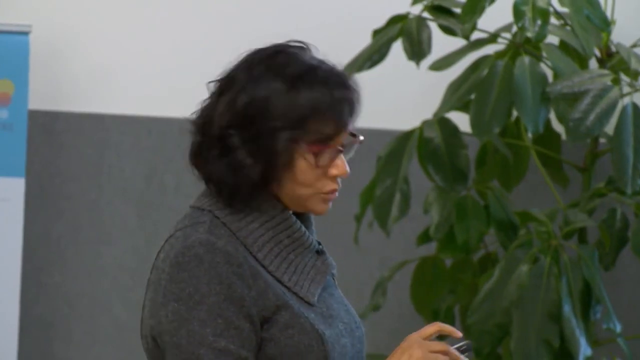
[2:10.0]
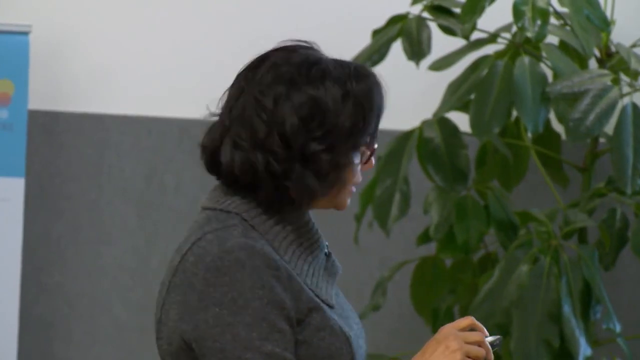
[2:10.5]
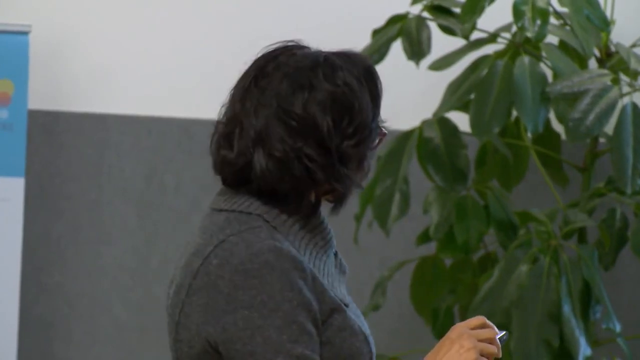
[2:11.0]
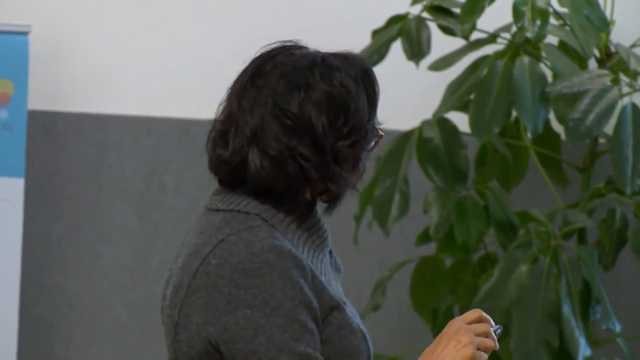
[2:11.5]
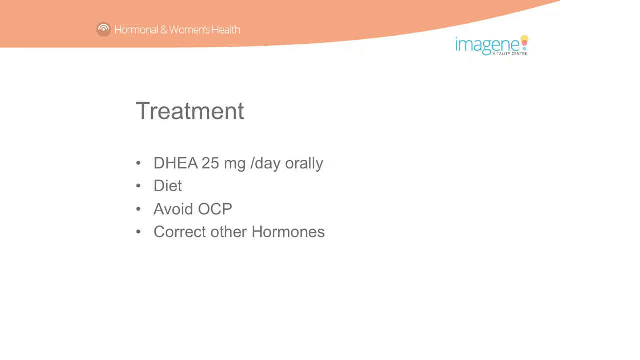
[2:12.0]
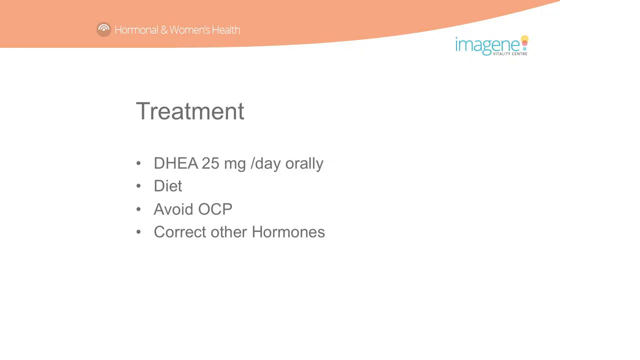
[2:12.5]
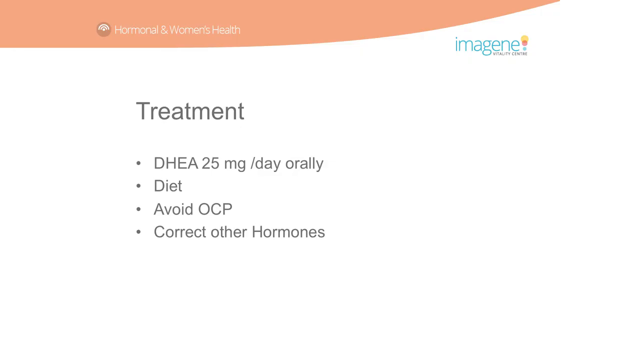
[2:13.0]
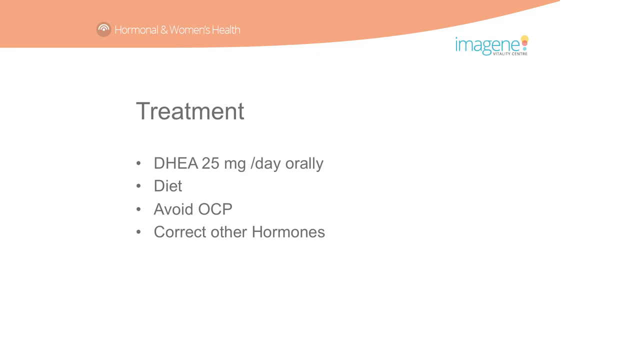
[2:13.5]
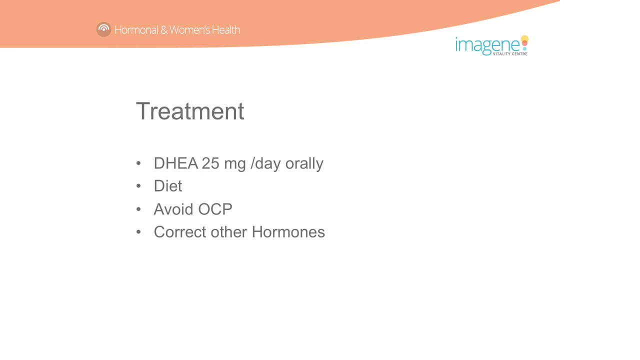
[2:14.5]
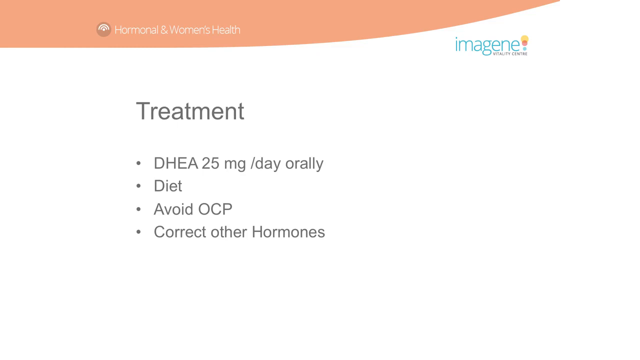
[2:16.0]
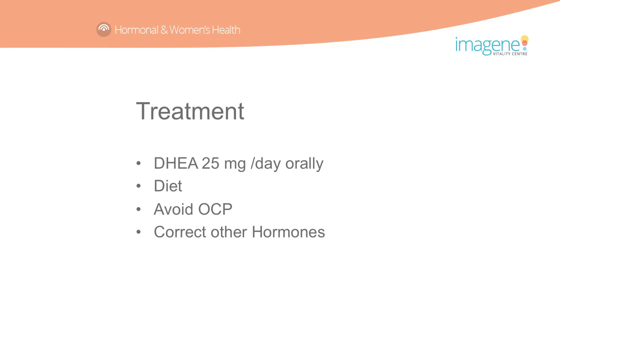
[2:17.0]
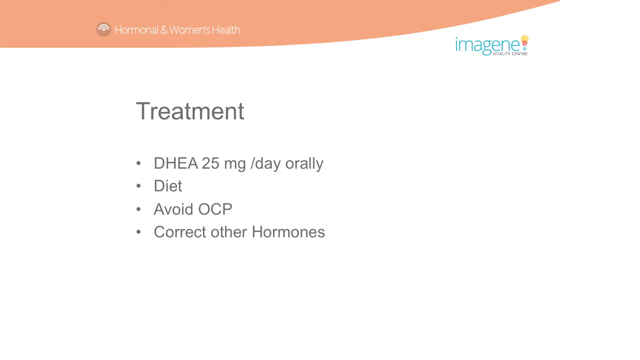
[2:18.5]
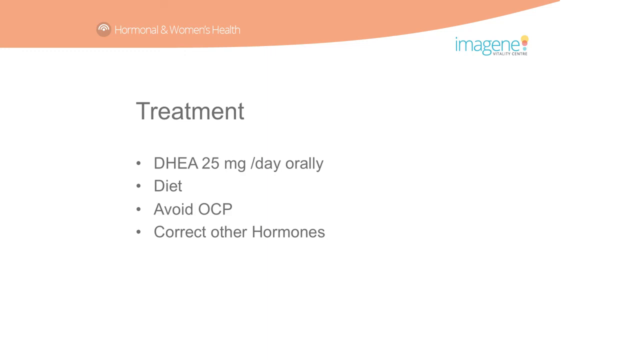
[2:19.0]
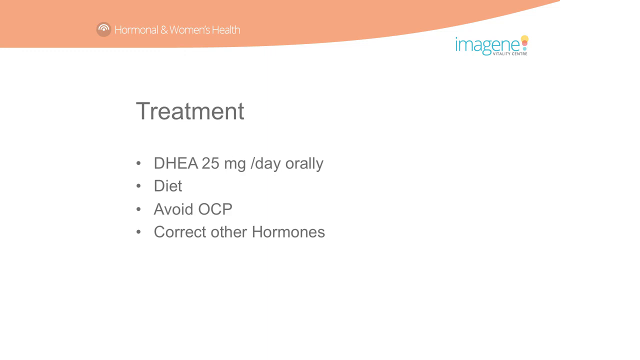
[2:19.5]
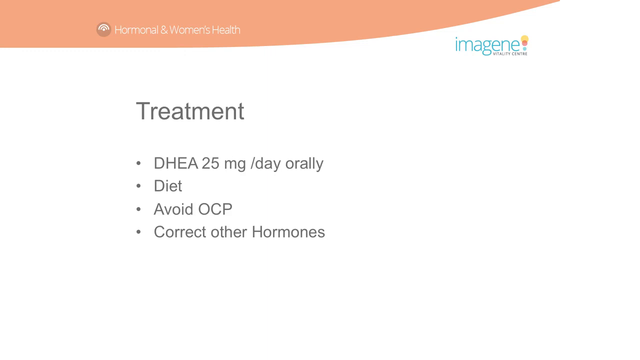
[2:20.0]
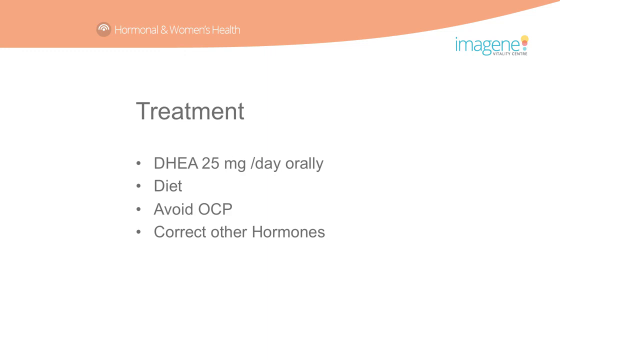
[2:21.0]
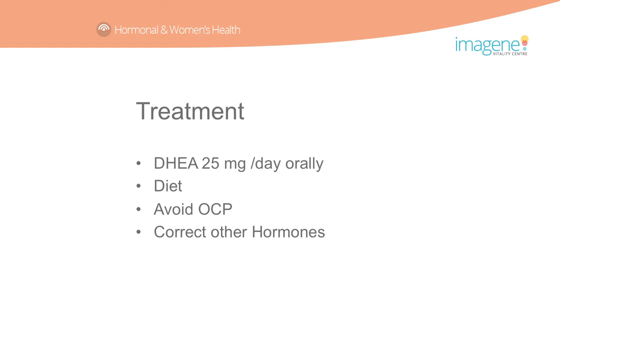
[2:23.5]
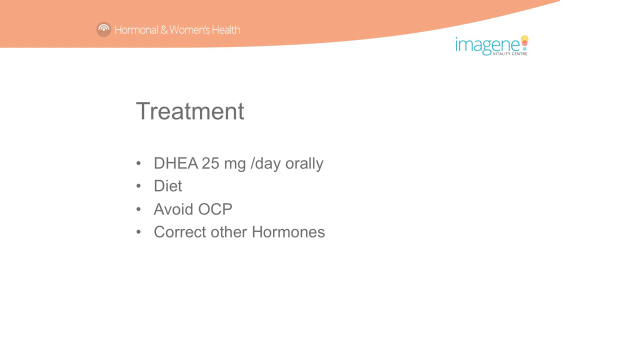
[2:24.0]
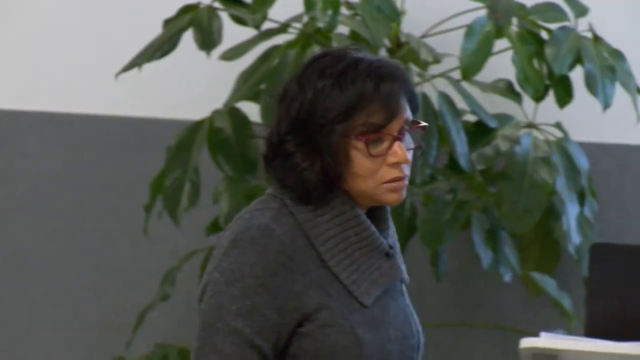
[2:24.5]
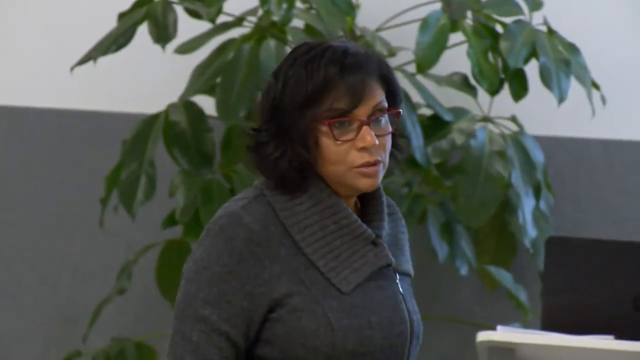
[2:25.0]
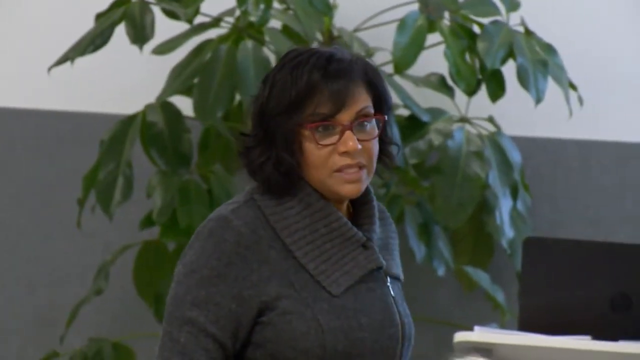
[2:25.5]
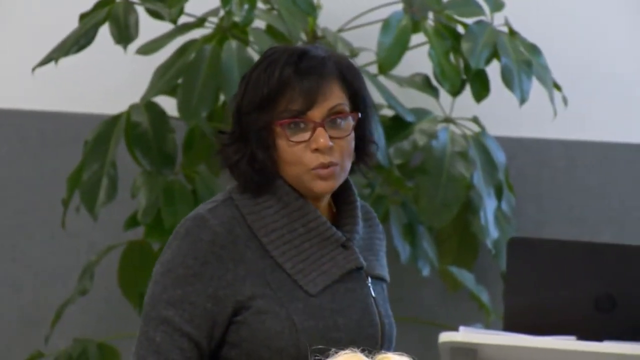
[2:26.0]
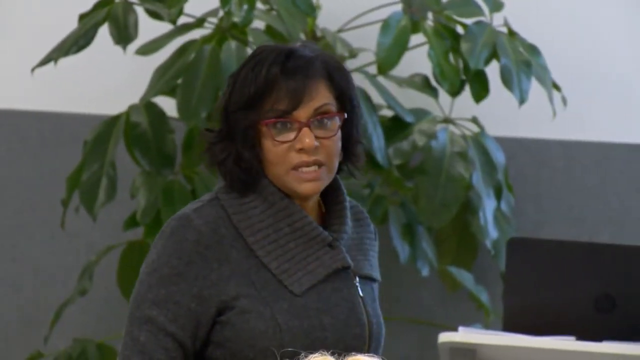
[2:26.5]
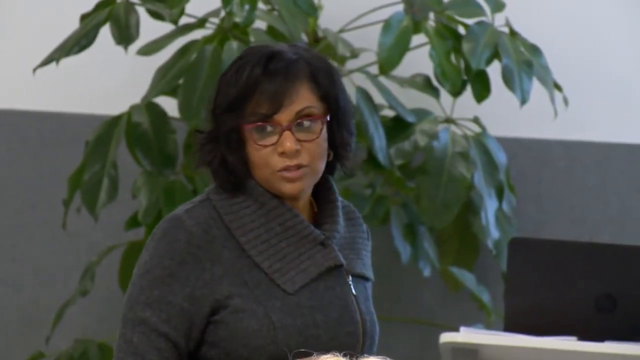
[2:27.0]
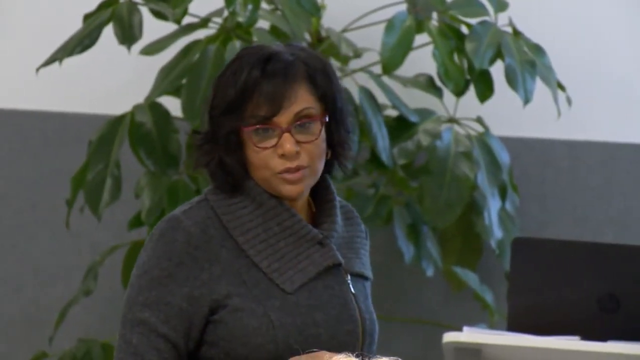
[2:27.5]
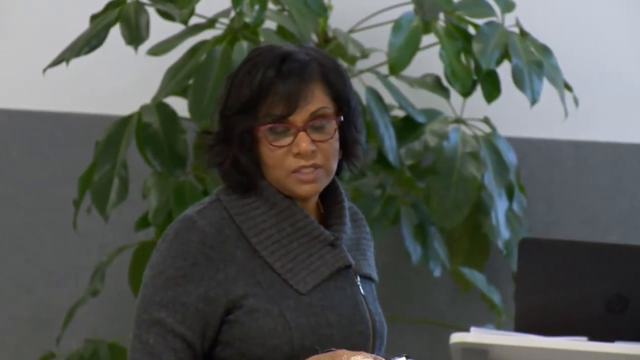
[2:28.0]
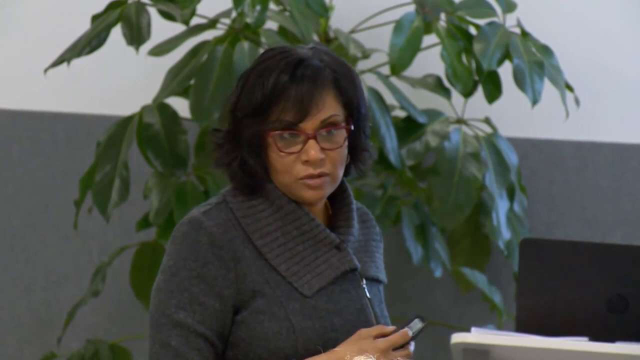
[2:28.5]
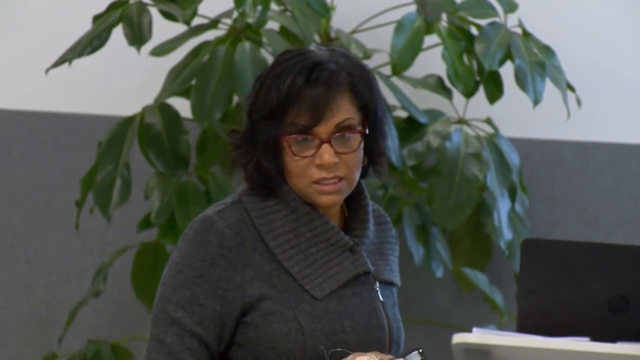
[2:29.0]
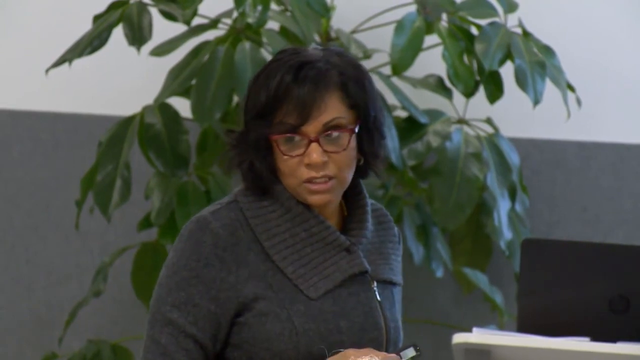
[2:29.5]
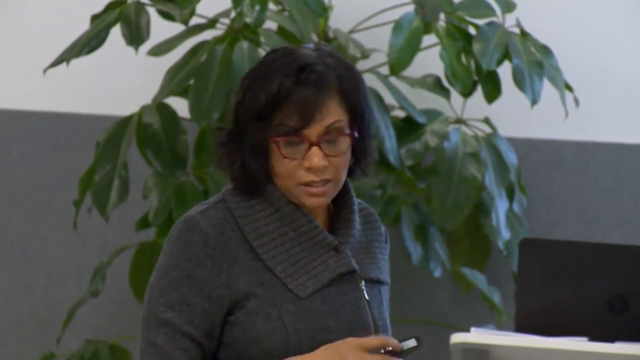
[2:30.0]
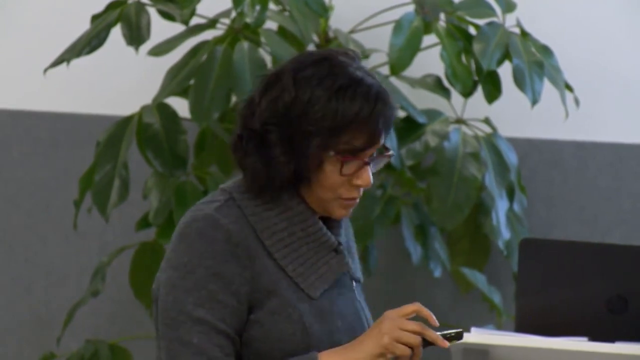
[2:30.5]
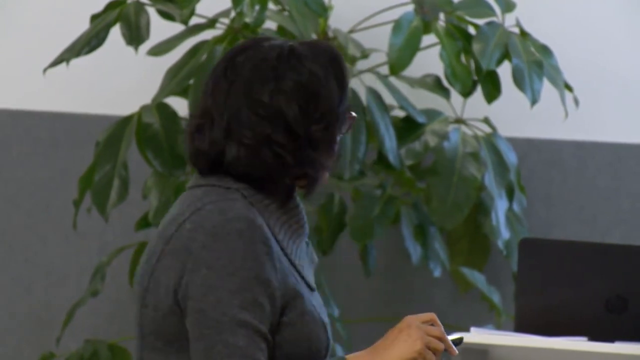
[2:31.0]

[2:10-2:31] The doctor is on the left side of the projection screen. She has a dark brown-black bob cut toward her shoulders, a gray top with a small mic attached to the top part, and glasses. A fake green plant is next to her. She is talking, then turns her head to look at the screen. A slide reads "treatment" with bullet points: "DHEA 25 milligrams/day orally", "diet", "avoid OCP", and "correct of the hormones". The slide stays up, then the view returns to the doctor speaking. Her glasses have burgundy frames and clear lenses, and she wears earrings; one small hoop earring is visible on her left ear. The video ends with her smiling with her arms crossed, the same way it began.